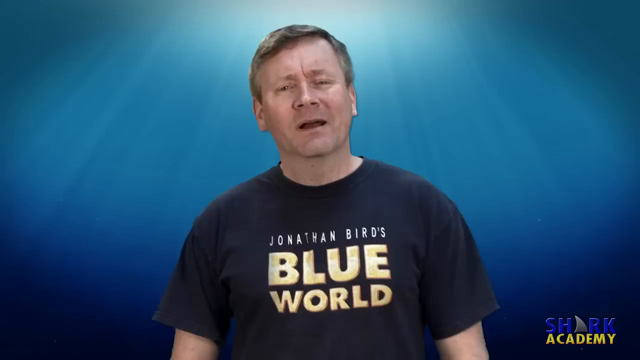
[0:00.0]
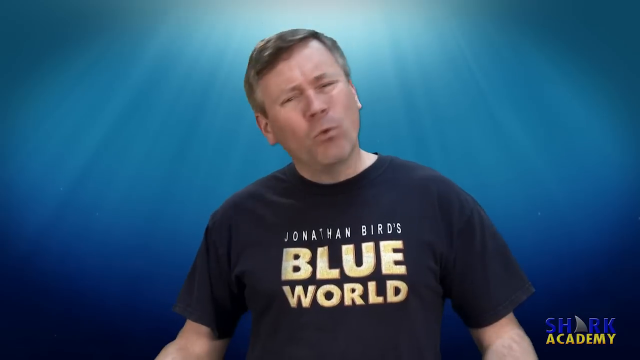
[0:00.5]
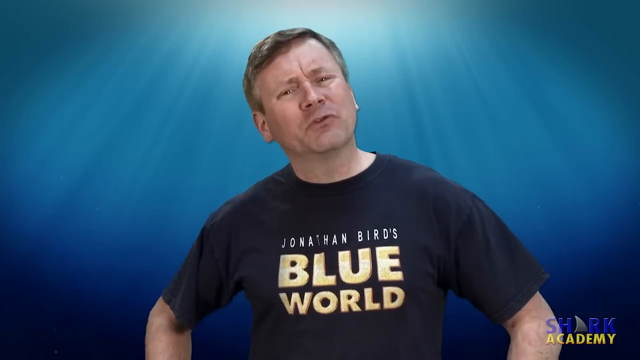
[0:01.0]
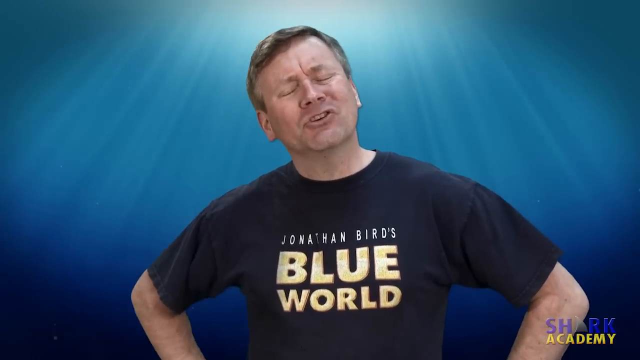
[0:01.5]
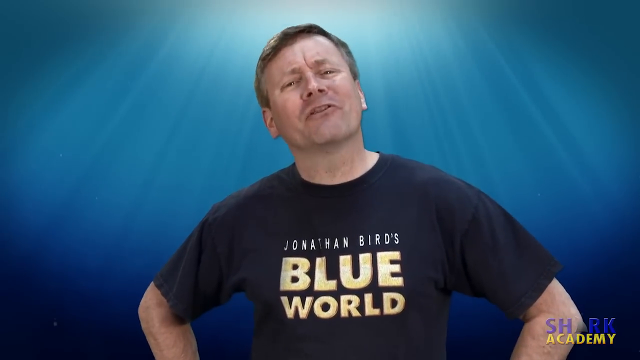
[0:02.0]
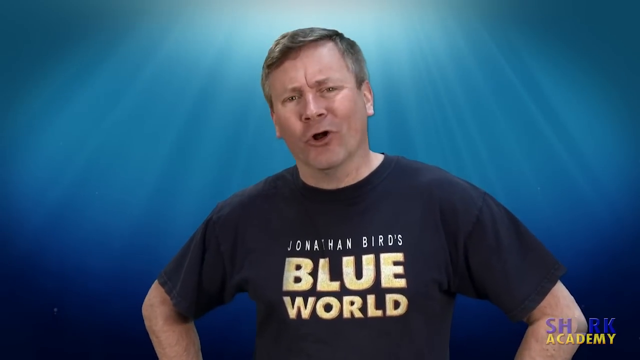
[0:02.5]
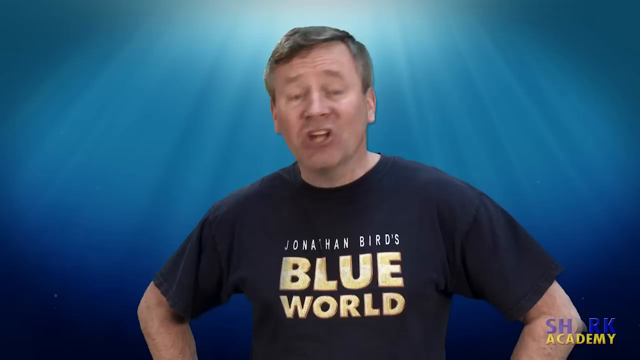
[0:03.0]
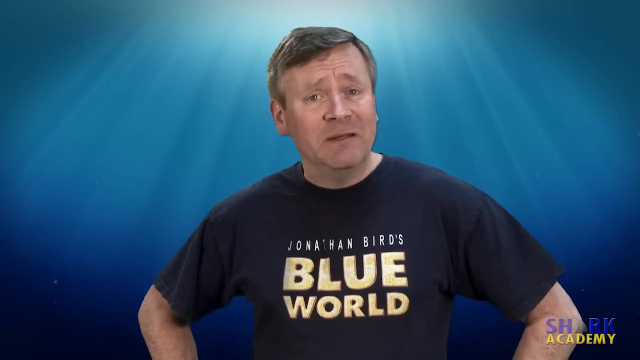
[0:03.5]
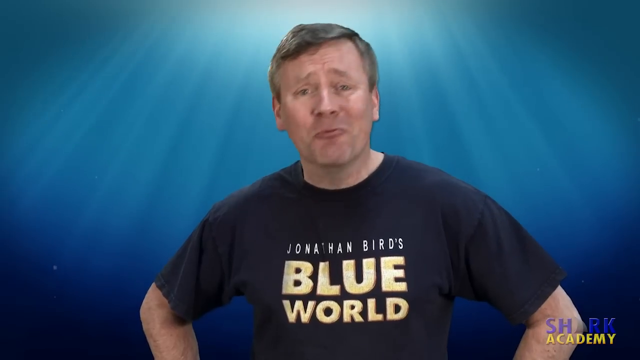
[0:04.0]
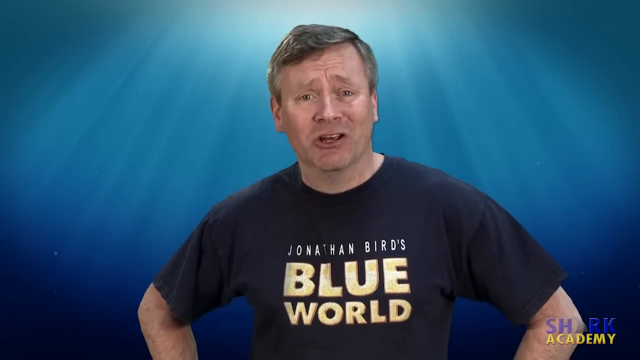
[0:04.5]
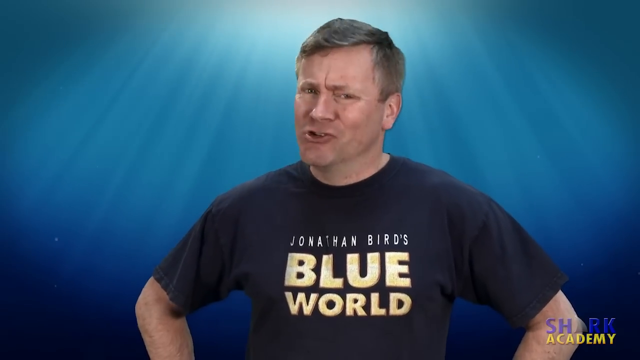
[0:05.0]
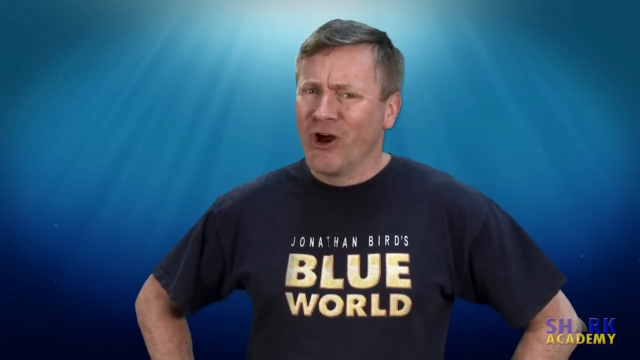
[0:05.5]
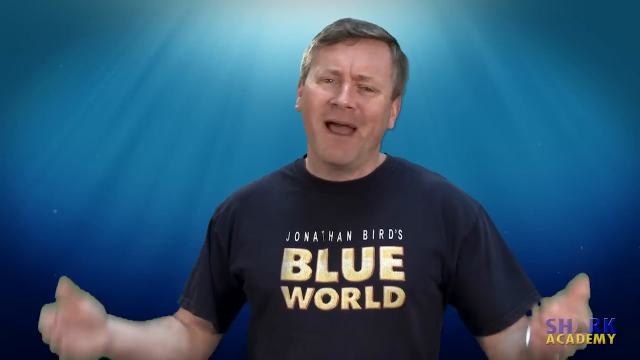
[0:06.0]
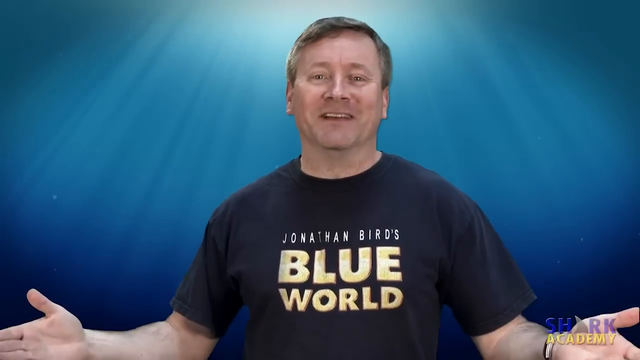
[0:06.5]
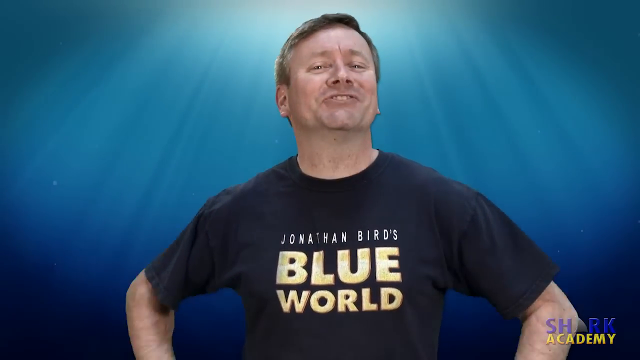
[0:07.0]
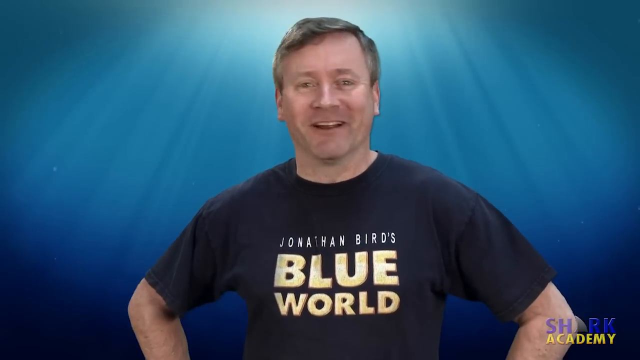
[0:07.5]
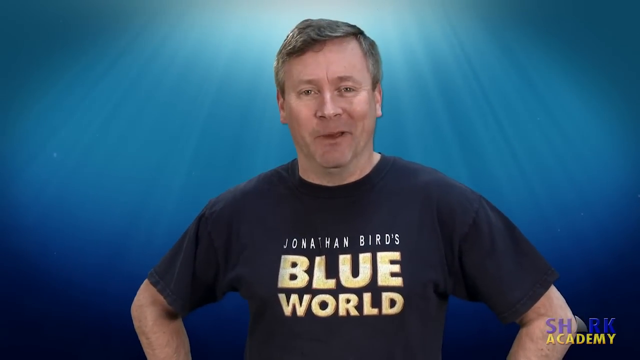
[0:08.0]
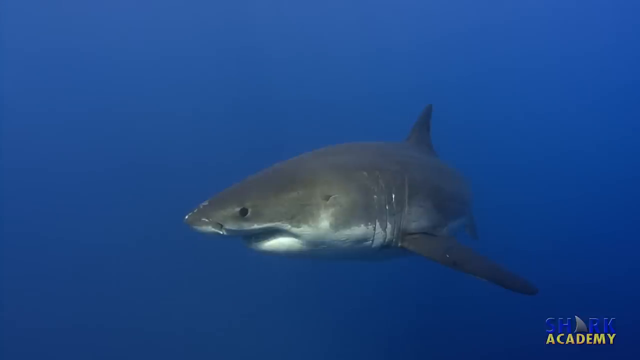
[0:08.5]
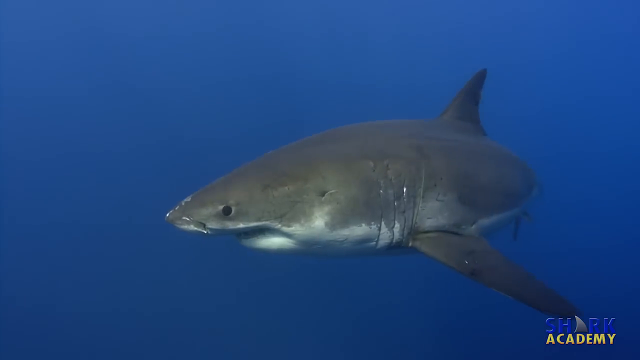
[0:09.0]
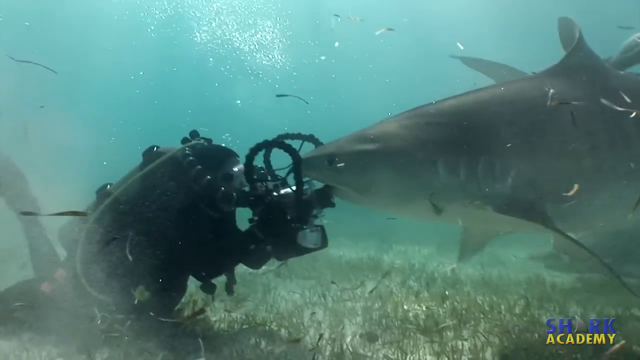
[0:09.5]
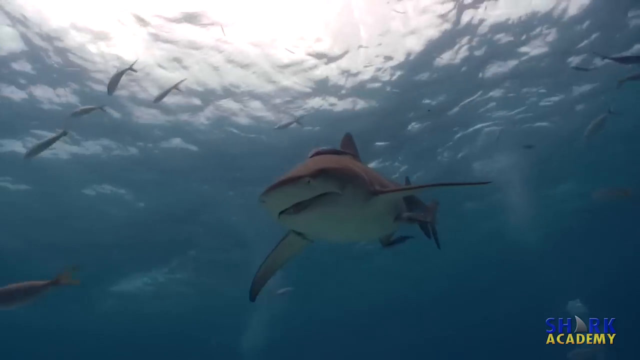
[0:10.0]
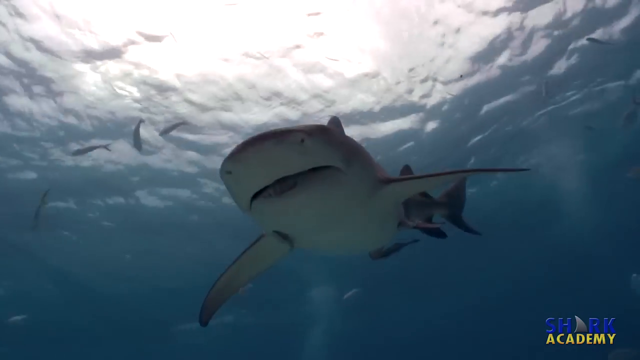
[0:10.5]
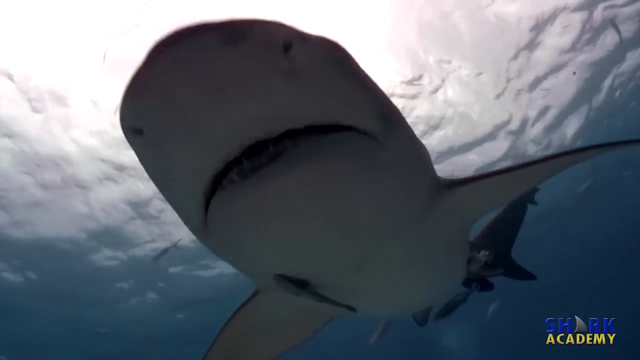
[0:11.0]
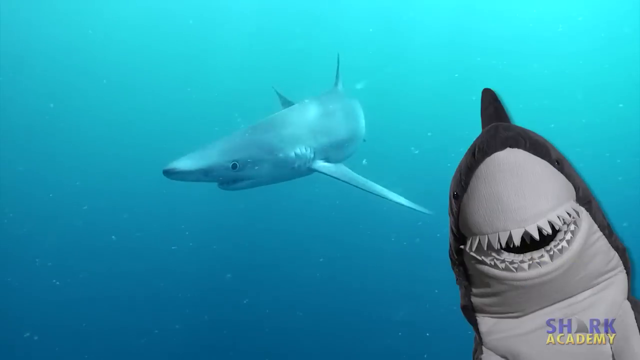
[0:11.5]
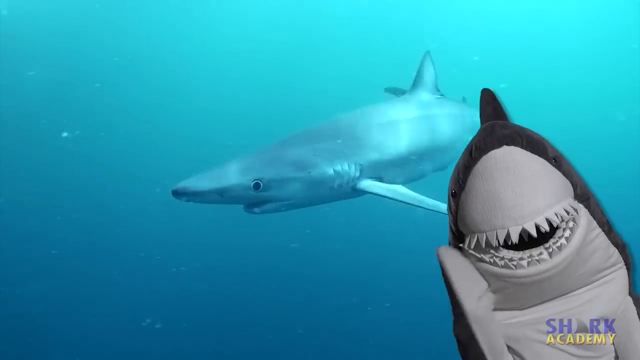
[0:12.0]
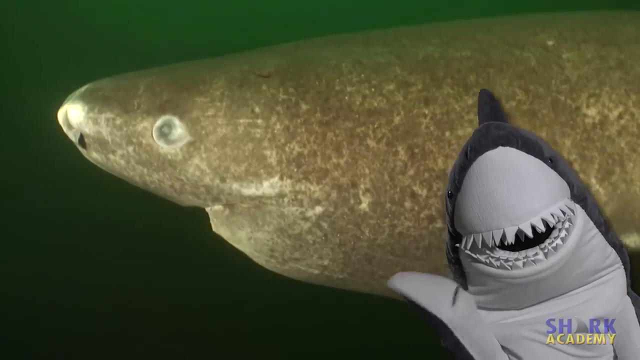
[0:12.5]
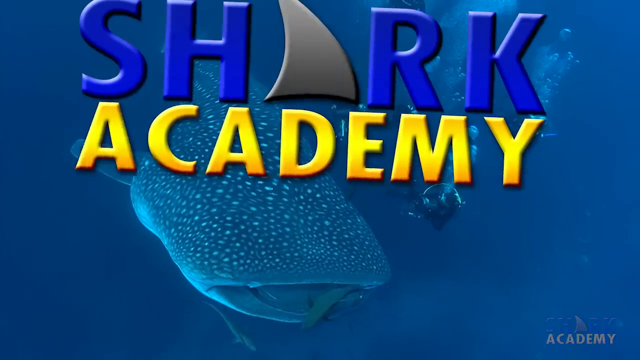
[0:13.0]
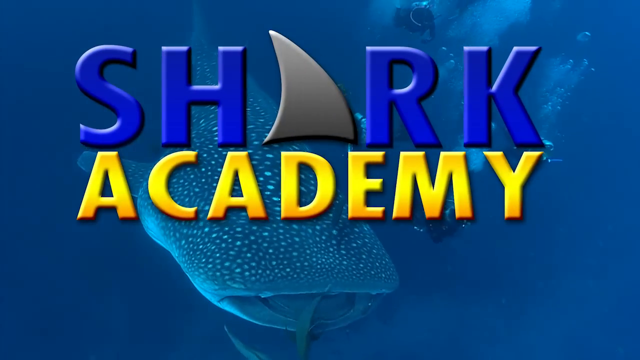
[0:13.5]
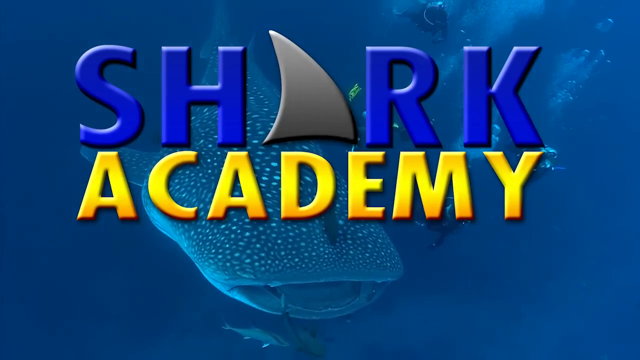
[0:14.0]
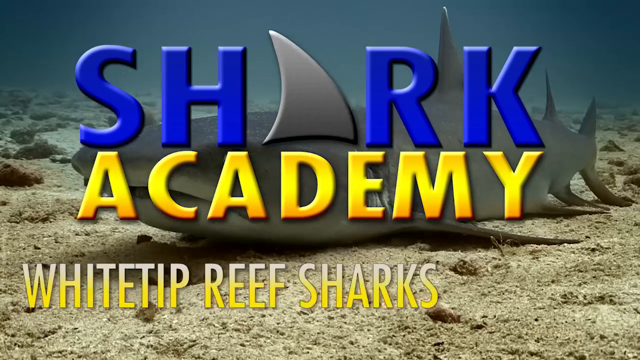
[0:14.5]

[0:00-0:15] A man in a dark blue shirt that says "Jonathan Bird's Blue World" stands in front of a blue backdrop, and in the right corner of the screen it says "Shark Academy," with the A in shark looking like a shark's dorsal fin. The video then switches to various scenes of sharks swimming underwater, some with other small fish. In one scene a shark swims up to someone in scuba gear holding what looks like a camera in front of them. At one point someone in a shark costume pops up from the lower right side and waves a fin at the screen. It ends with the Shark Academy banner in the middle of the screen, with "Whitetip Reef Sharks" underneath it.